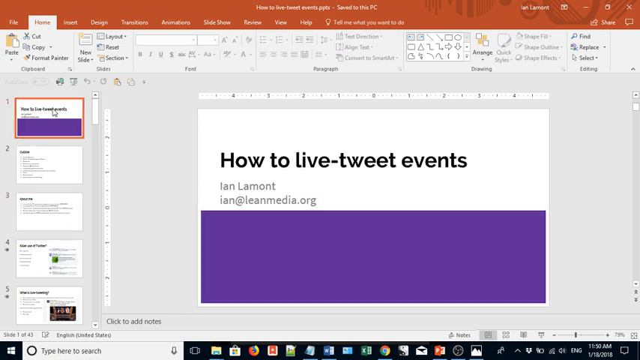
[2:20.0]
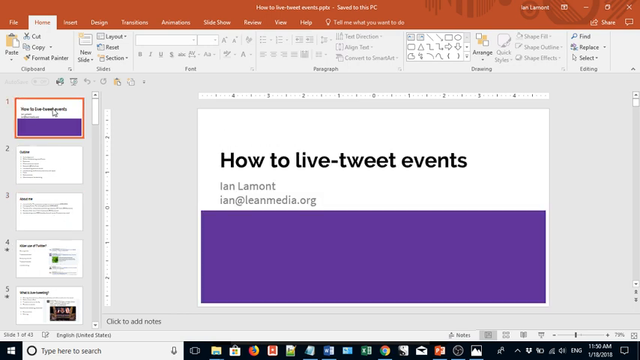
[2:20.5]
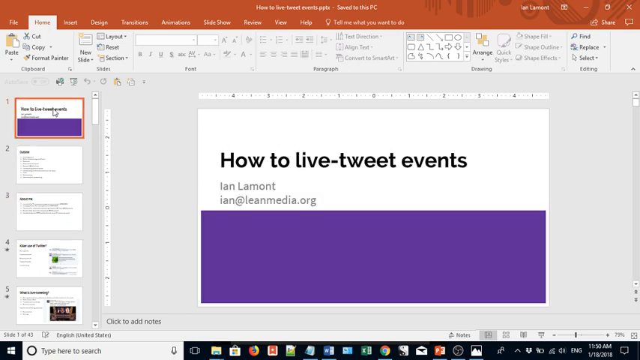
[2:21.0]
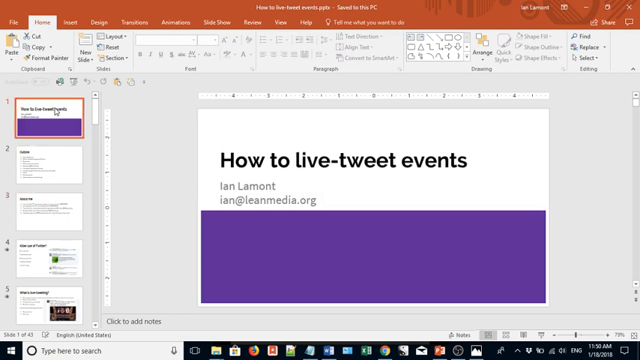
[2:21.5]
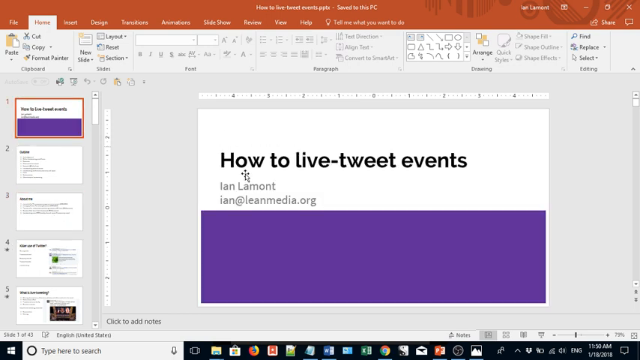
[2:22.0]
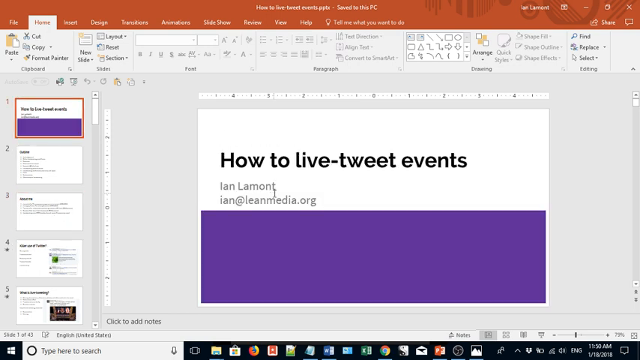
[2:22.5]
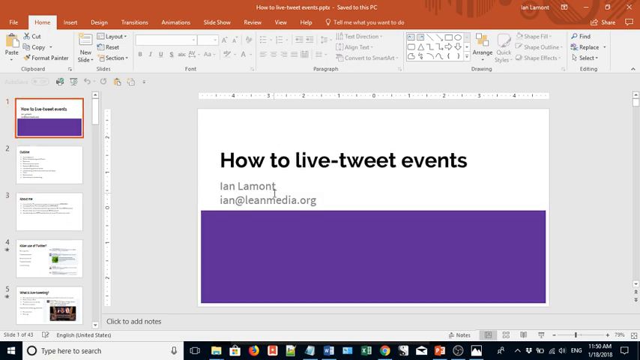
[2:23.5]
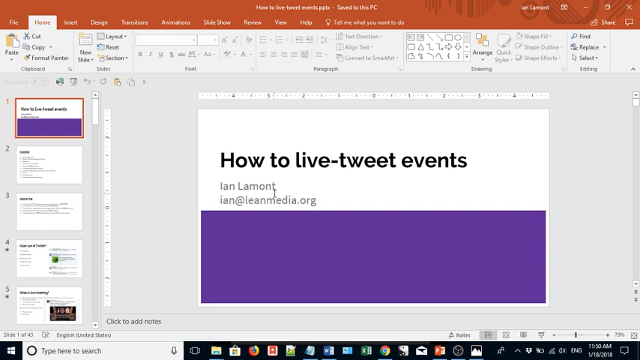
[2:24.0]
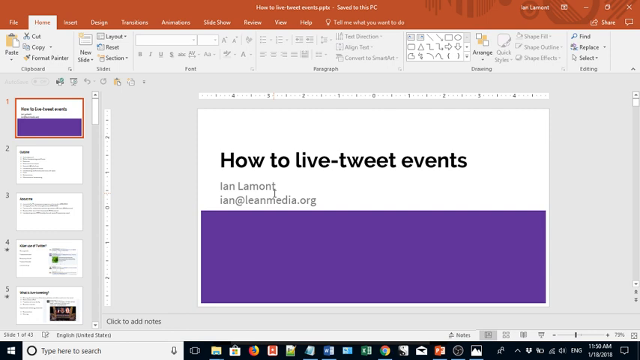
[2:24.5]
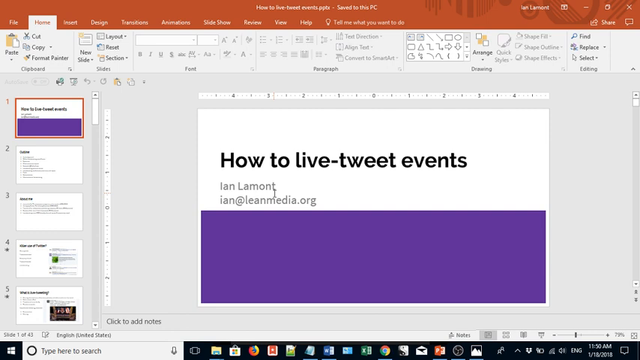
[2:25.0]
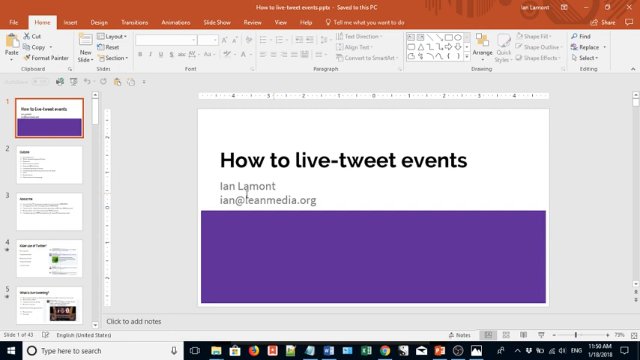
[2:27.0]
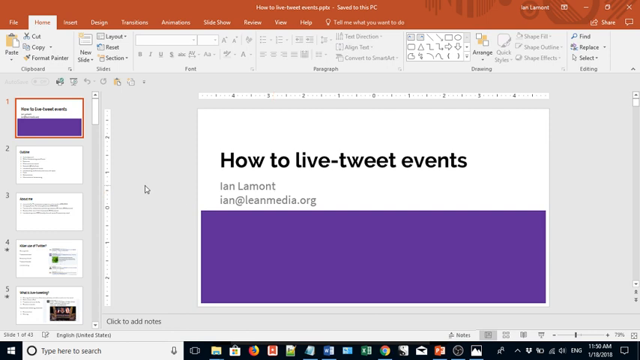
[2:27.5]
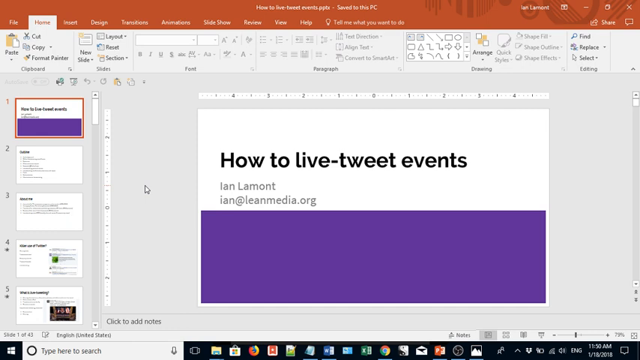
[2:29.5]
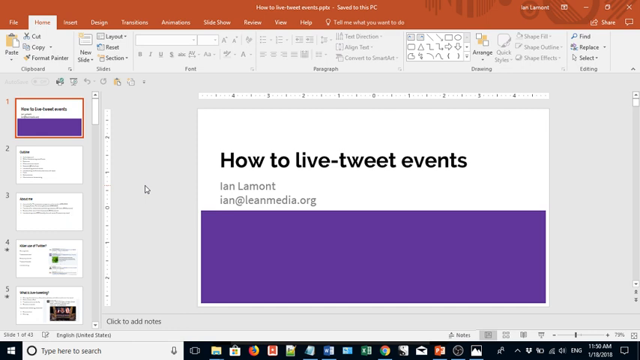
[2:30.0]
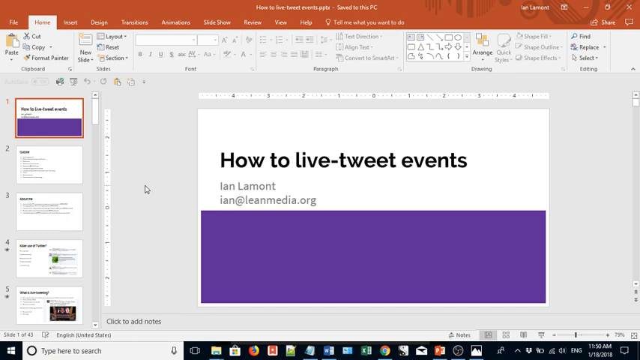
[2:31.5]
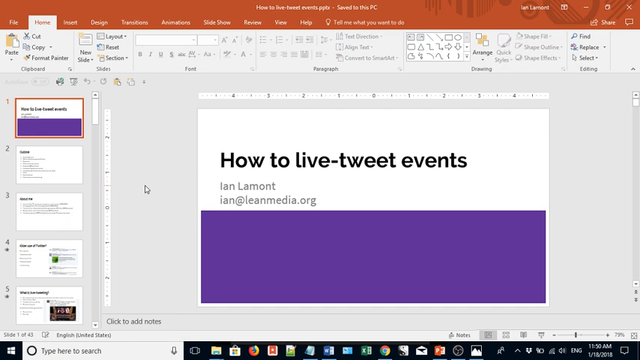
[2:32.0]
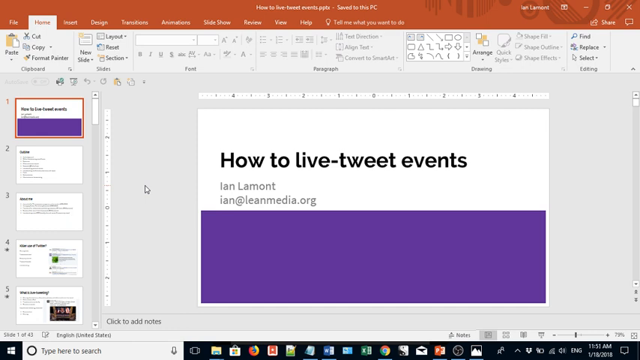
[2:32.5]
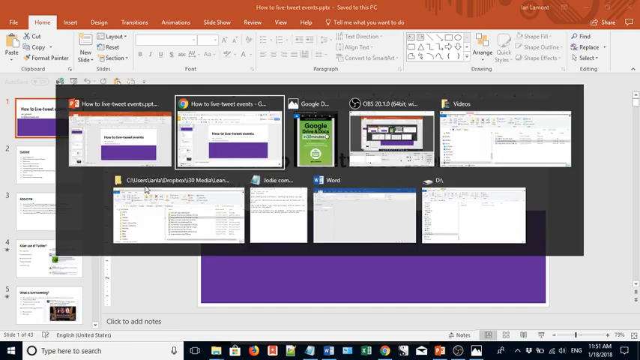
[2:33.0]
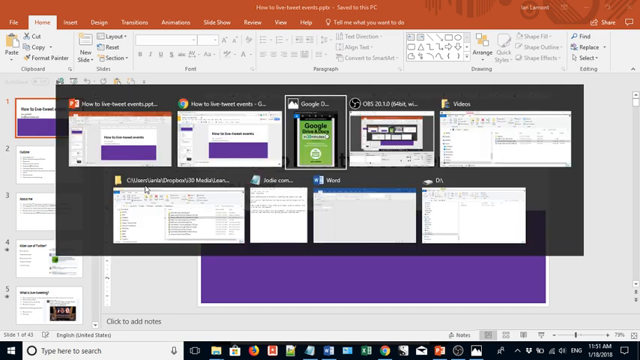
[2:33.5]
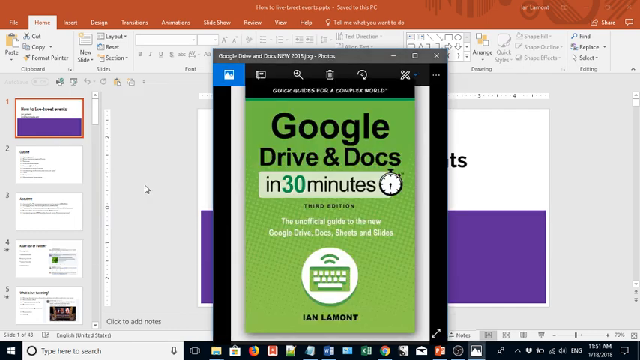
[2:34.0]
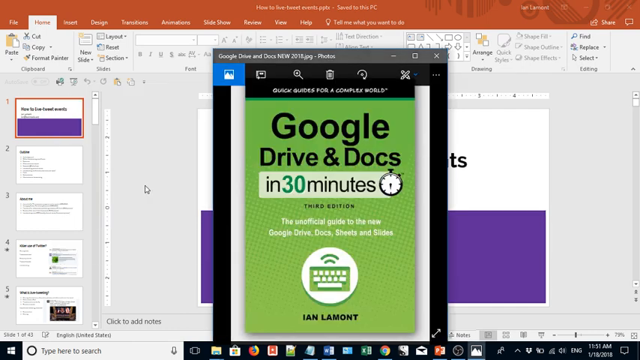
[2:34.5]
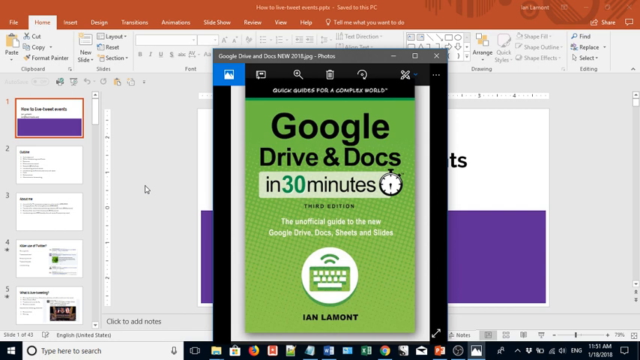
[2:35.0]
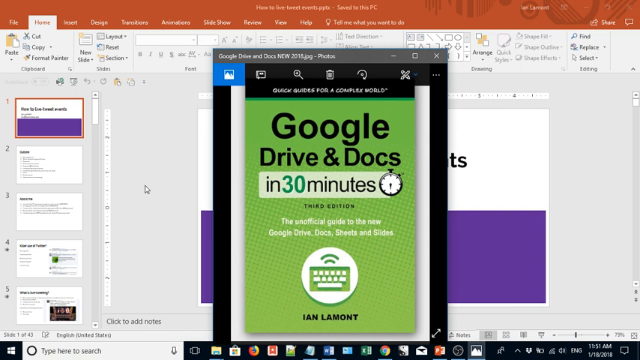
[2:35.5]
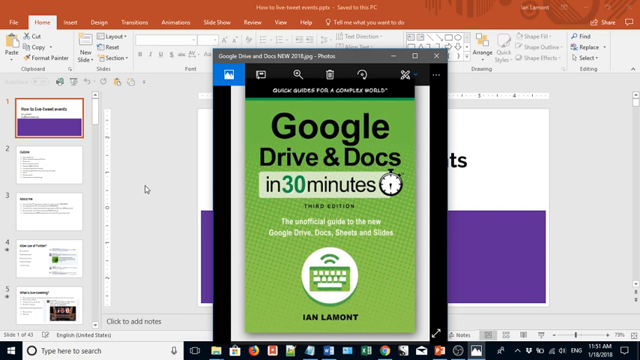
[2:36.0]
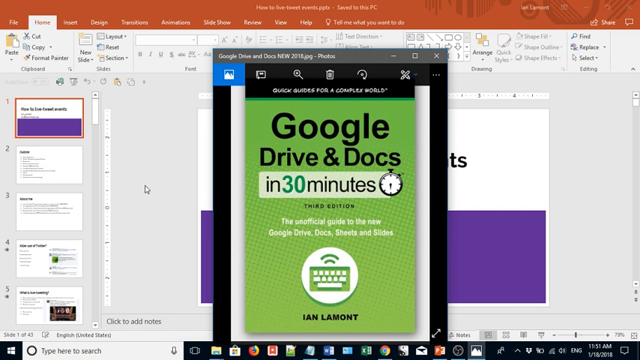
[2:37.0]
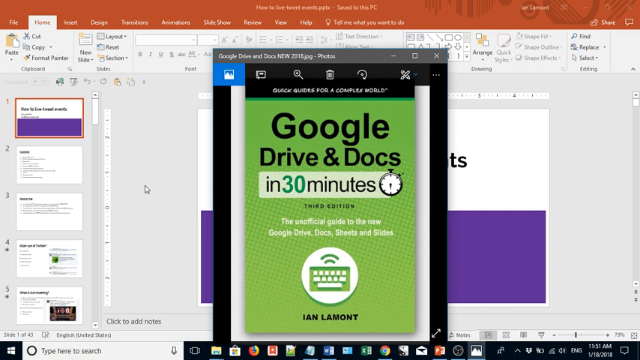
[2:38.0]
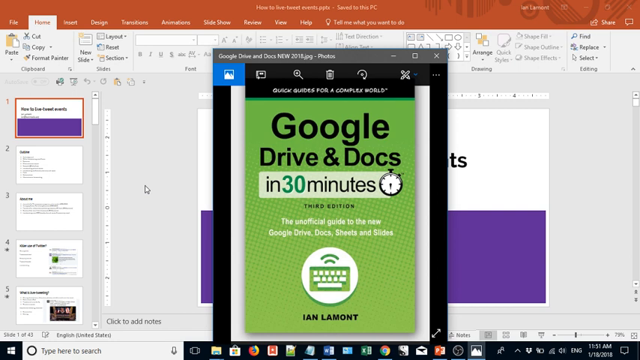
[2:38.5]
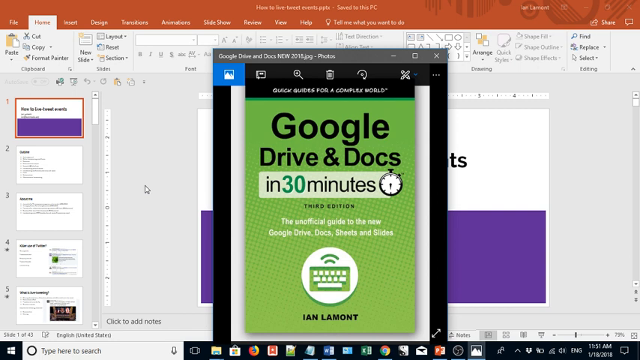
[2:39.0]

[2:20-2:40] A PowerPoint presentation is open on a slide with a white background and the title "About Me" in bold black text at the top left, with five bullet points beneath it giving information about the creator of the presentation. The cursor clicks slide 1 in the left panel of preview thumbnails, and the full view on the right changes to a slide with a white background, a heading at the top in large black text reading "How to Live-Tweet Events," "Ian Lamont" below it in smaller black text, and "ian@leanmedia.org" beneath that. A transparent black rectangular box then pops up on the screen showing small thumbnails of all the windows open on the computer. The user selects the third window, which appears on screen: a small, taller window showing a JPEG file of what looks like a book cover. It has a green background, black text toward the top reading "Google Drive and Docs in 30 minutes, Third edition," and smaller white text underneath reading "The Unofficial Guide to the New Google Drive Docs, Sheets, and Slides." Below that is an icon that looks like a white circle with a cutout of a keyboard inside and something like Wi-Fi symbols above the keyboard, and under the circle the author's name, "Ian Lamont," appears in small black letters.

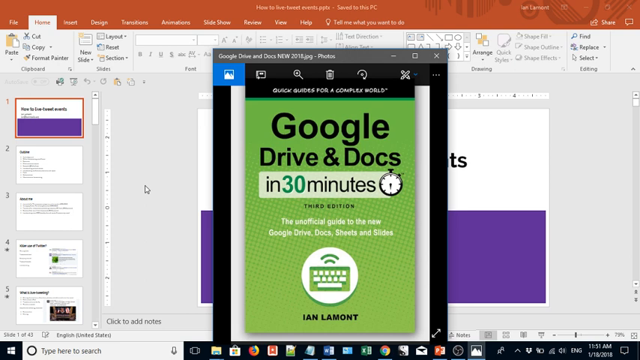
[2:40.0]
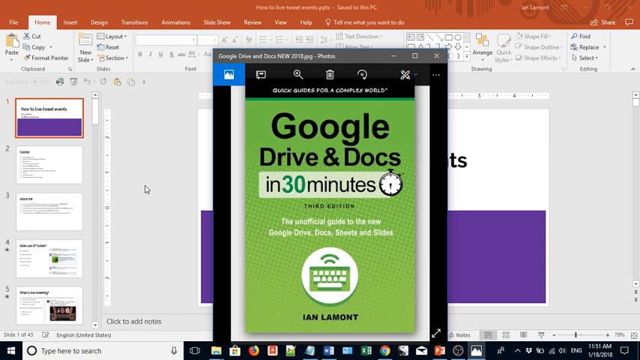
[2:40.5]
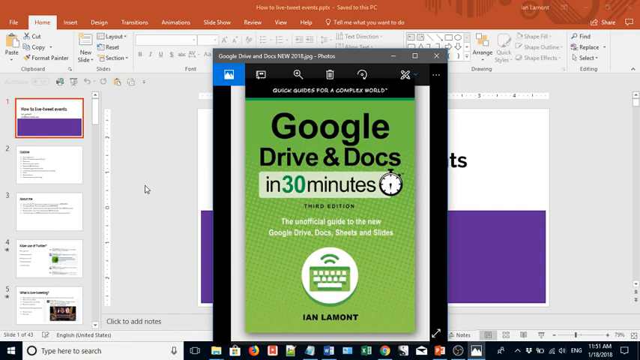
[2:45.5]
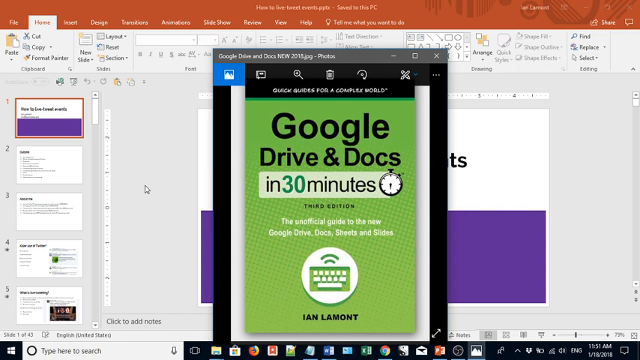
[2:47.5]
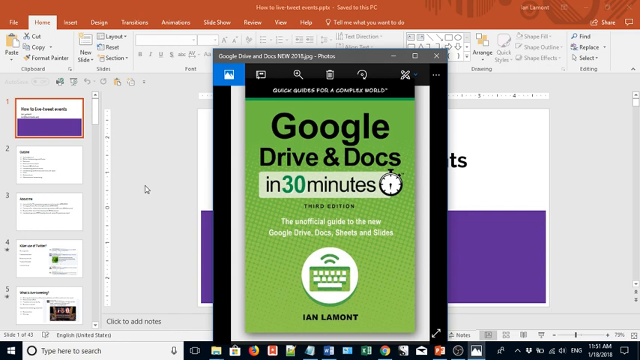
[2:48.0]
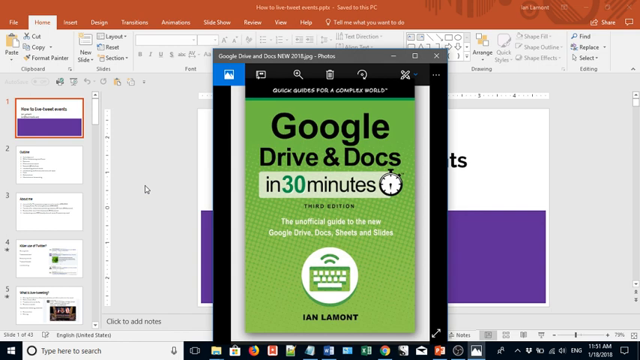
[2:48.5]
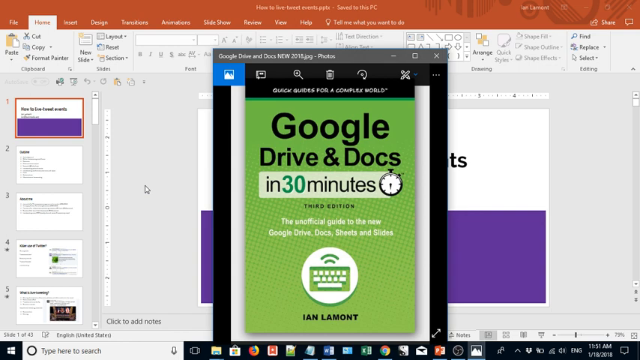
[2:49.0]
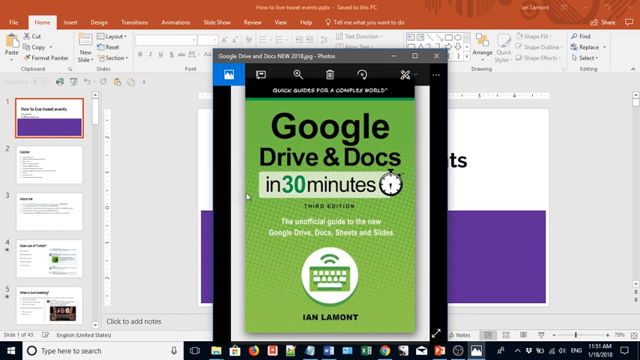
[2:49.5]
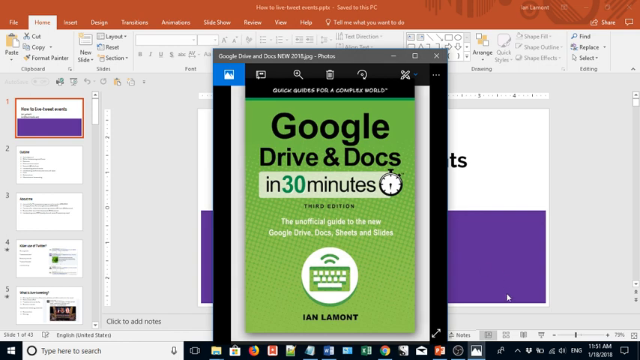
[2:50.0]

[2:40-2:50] A small window shows a JPEG image that looks like a book cover with a green background. At the top, in large black letters, it says "Google Drive and Docs in 30 minutes third edition," and in smaller white letters "the unofficial guide to the new Google Drive Docs sheets and slides." Beneath that is a white circle symbol with a cutout of a keyboard inside and something like a Wi-Fi symbol above the keyboard, and at the bottom the author's name, "Ian Lamont," in small black letters. Behind the JPEG window, a PowerPoint presentation is open.